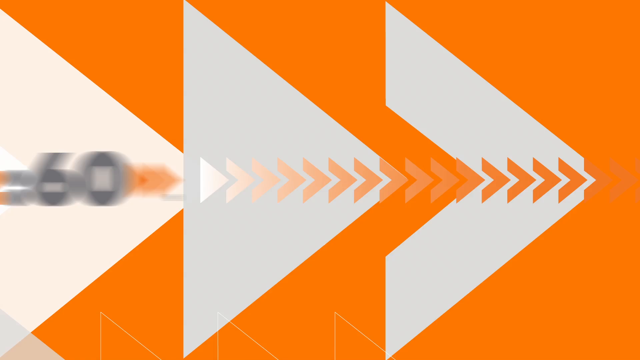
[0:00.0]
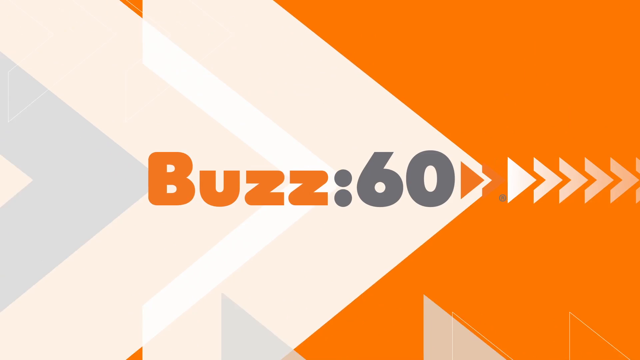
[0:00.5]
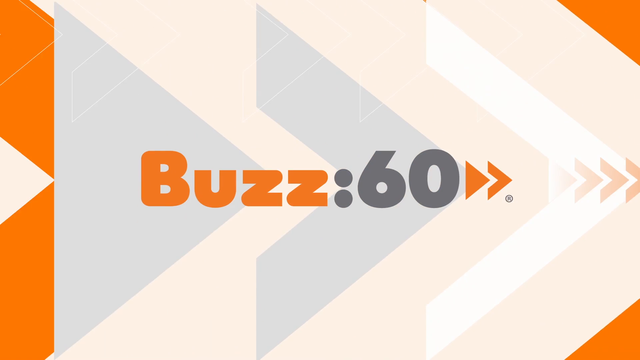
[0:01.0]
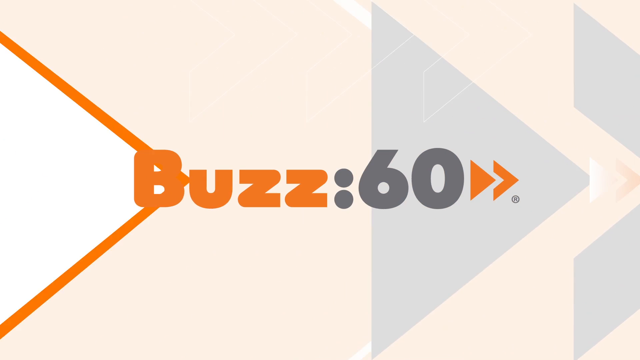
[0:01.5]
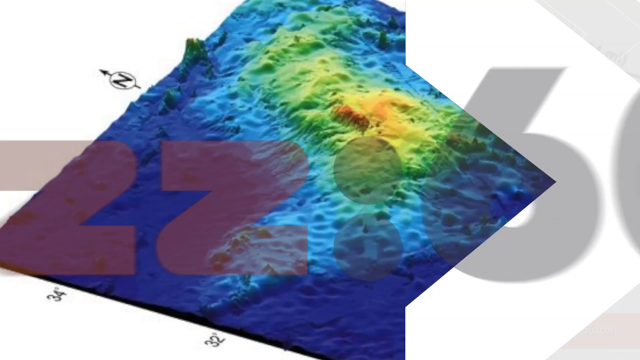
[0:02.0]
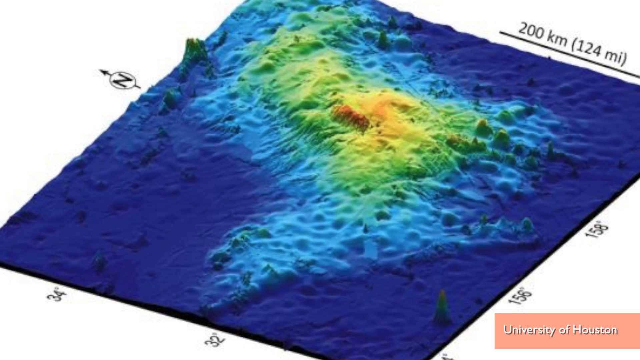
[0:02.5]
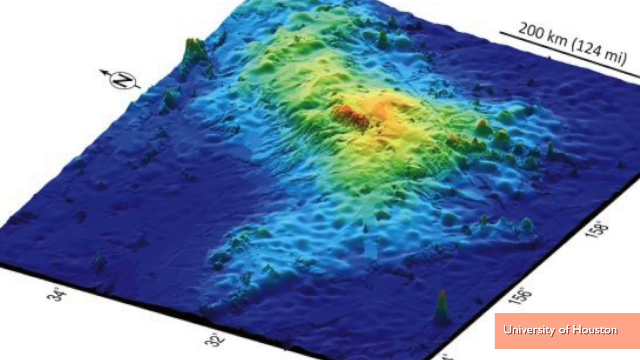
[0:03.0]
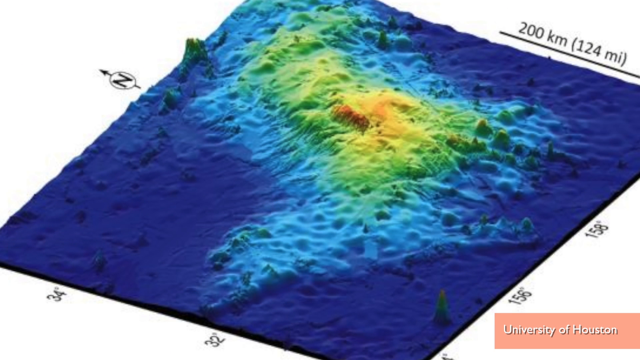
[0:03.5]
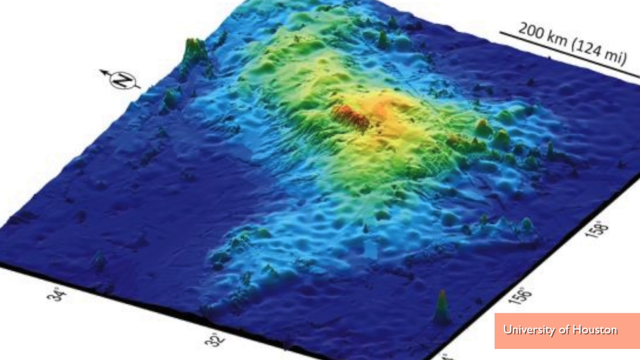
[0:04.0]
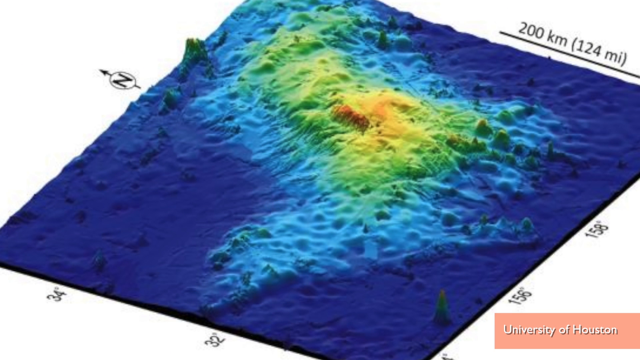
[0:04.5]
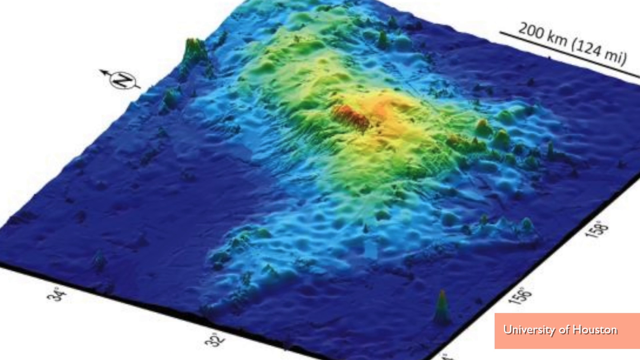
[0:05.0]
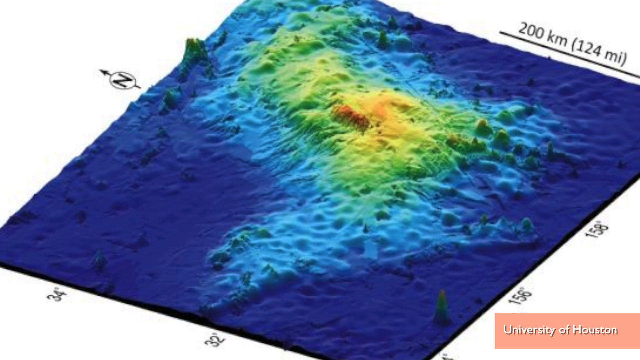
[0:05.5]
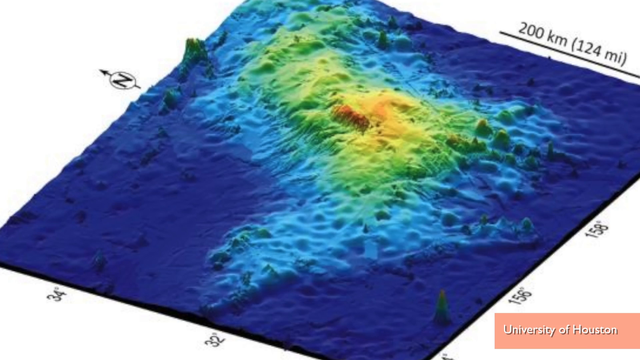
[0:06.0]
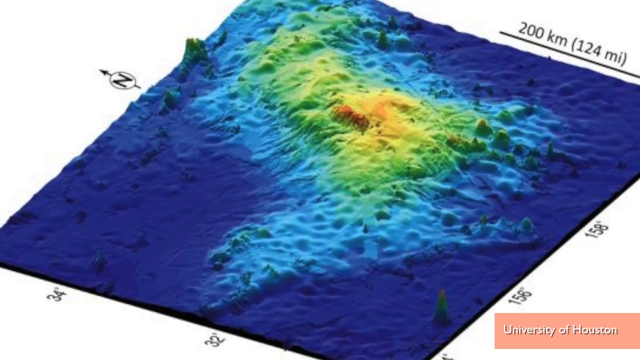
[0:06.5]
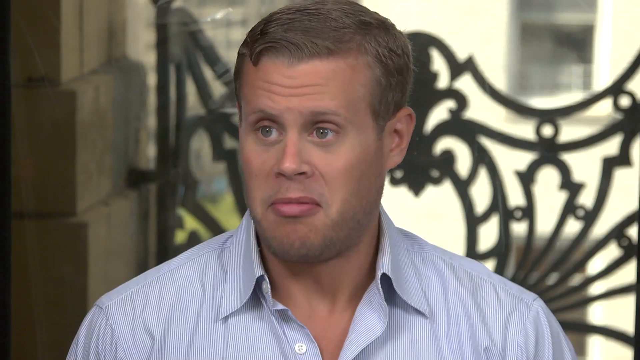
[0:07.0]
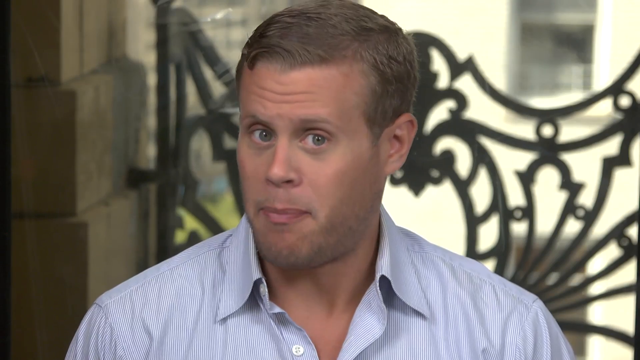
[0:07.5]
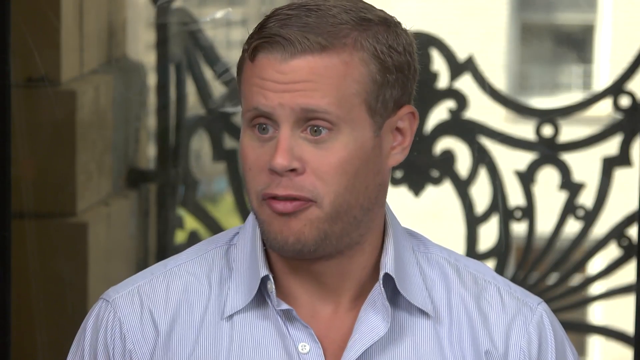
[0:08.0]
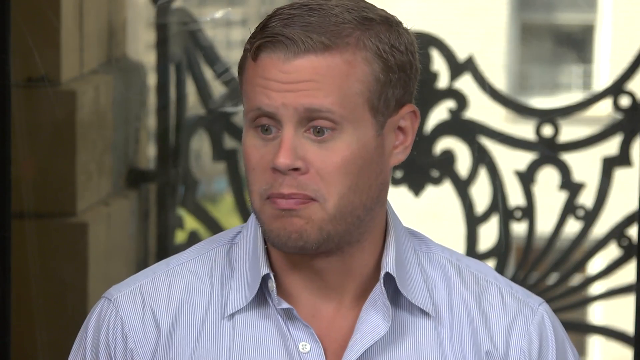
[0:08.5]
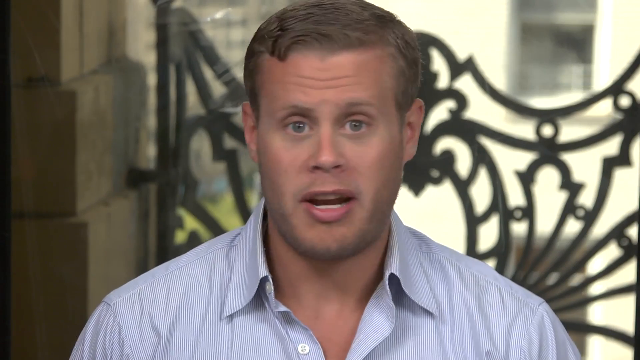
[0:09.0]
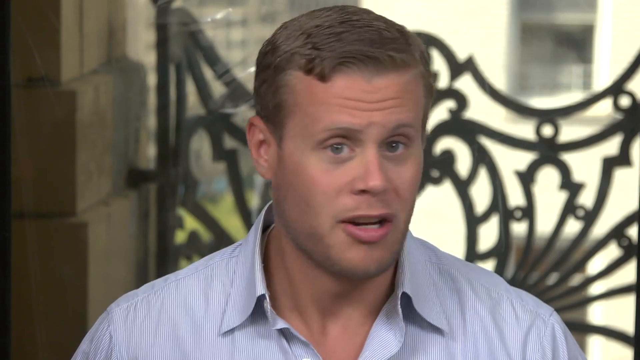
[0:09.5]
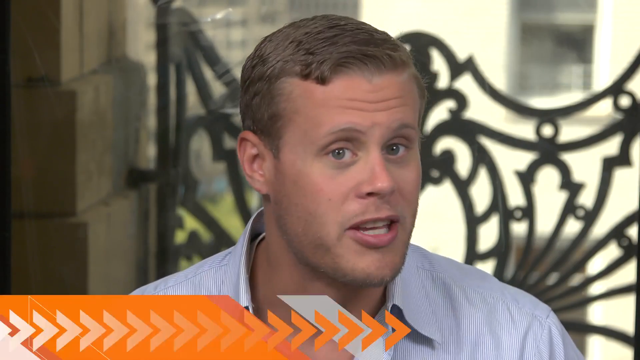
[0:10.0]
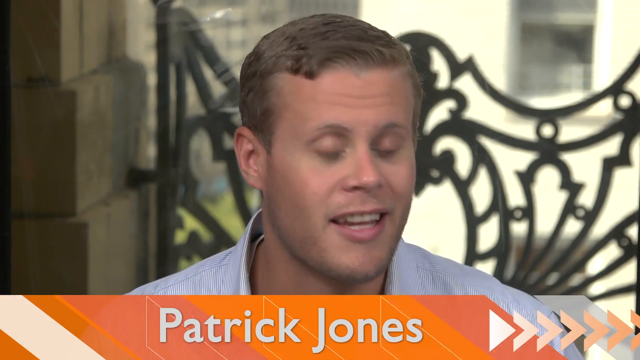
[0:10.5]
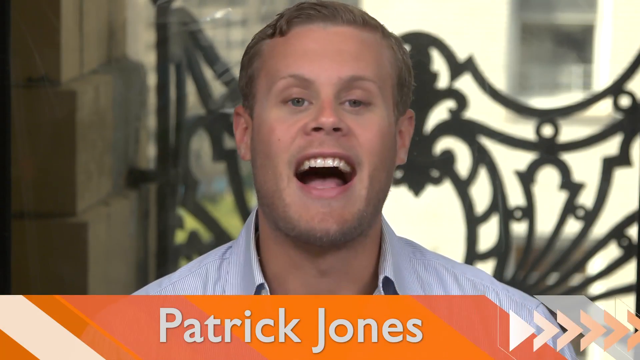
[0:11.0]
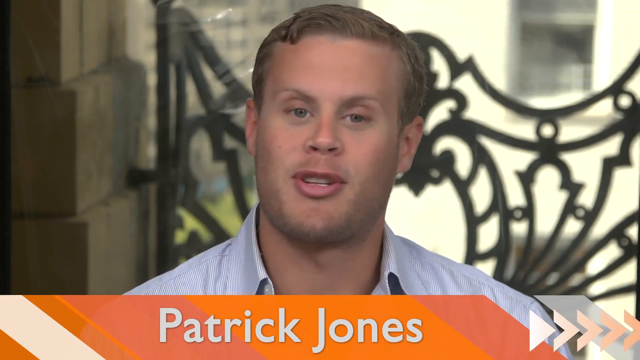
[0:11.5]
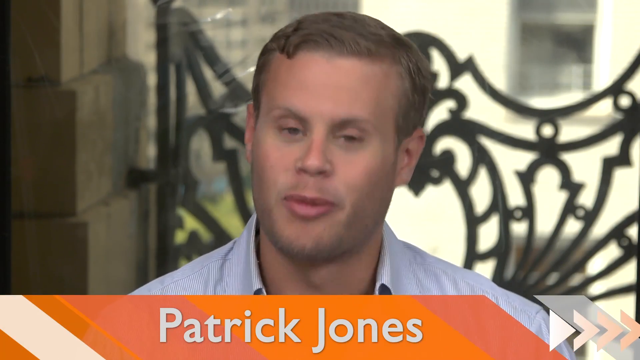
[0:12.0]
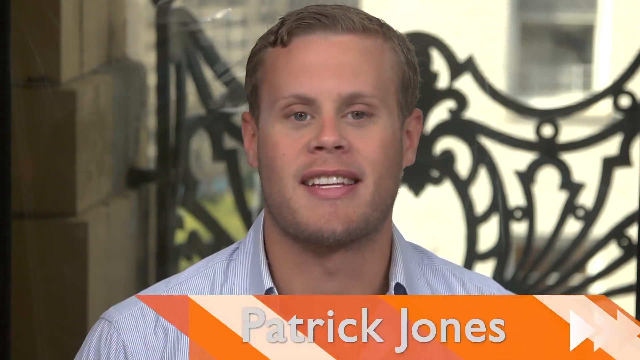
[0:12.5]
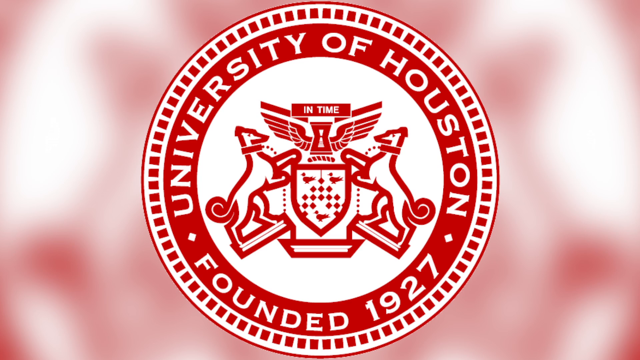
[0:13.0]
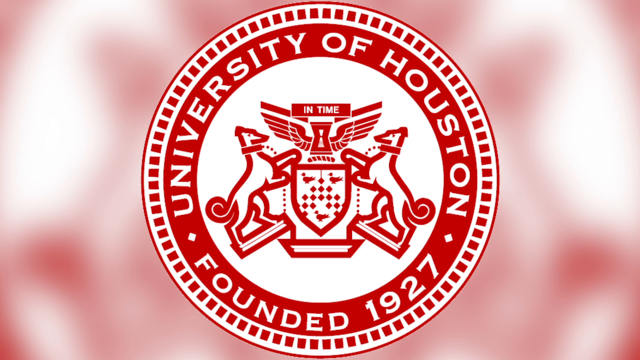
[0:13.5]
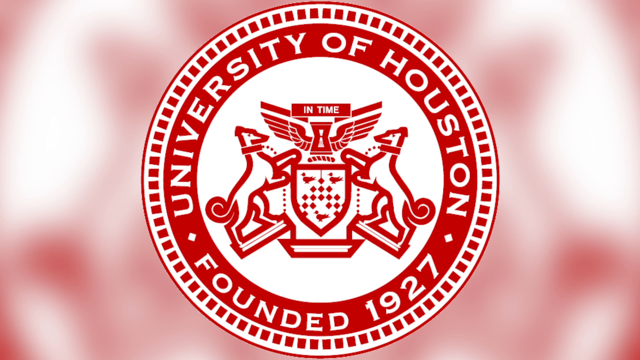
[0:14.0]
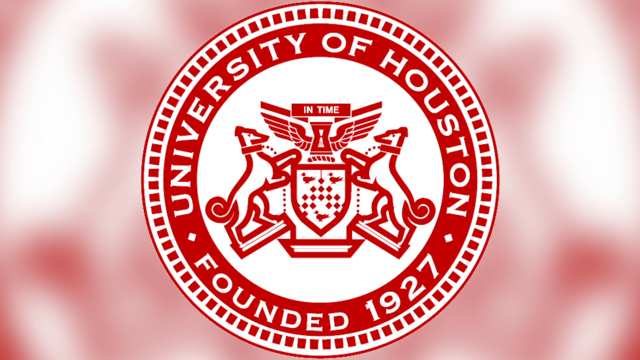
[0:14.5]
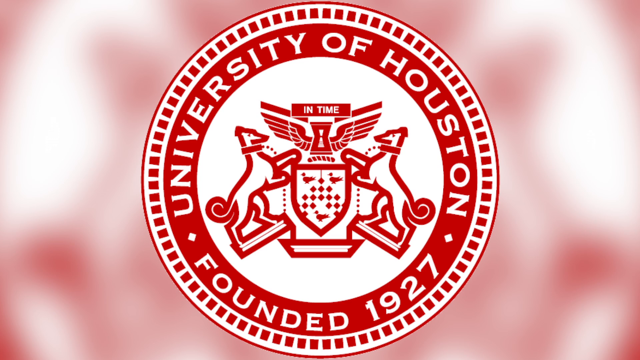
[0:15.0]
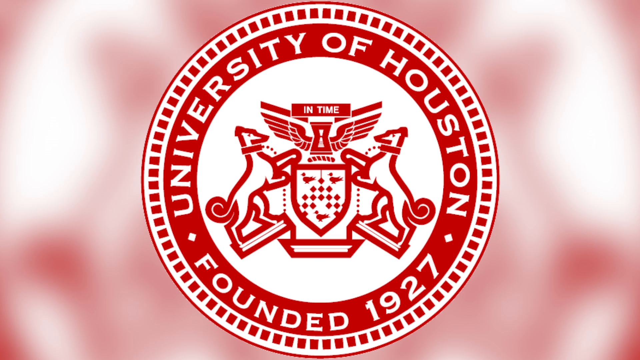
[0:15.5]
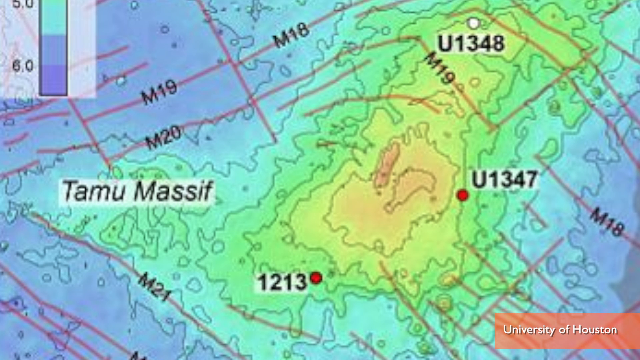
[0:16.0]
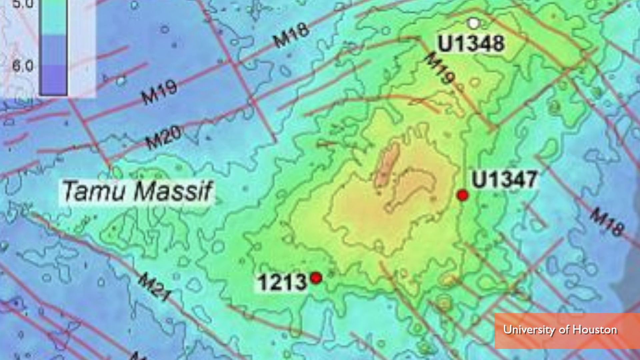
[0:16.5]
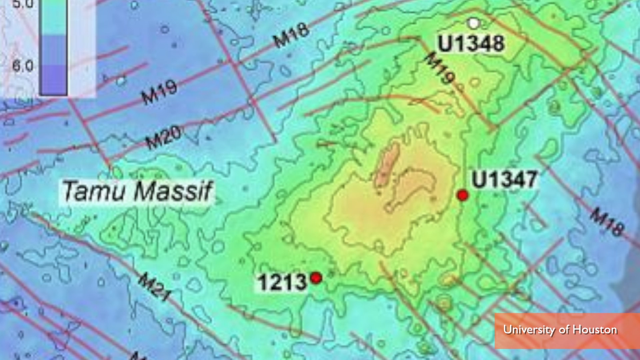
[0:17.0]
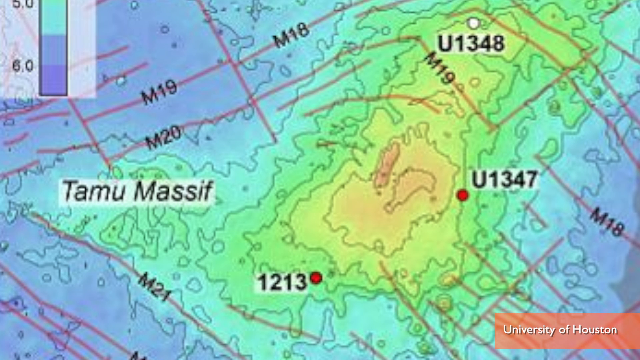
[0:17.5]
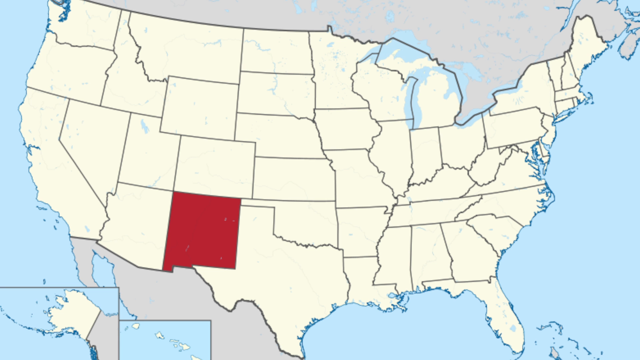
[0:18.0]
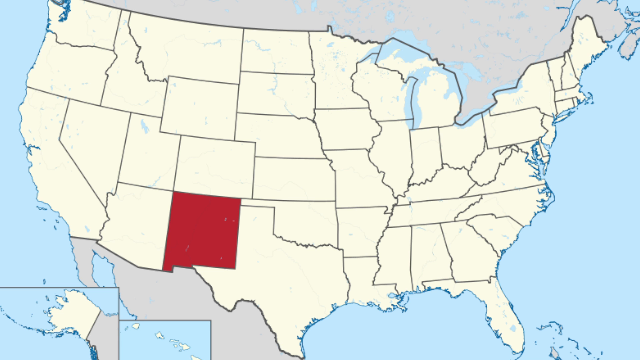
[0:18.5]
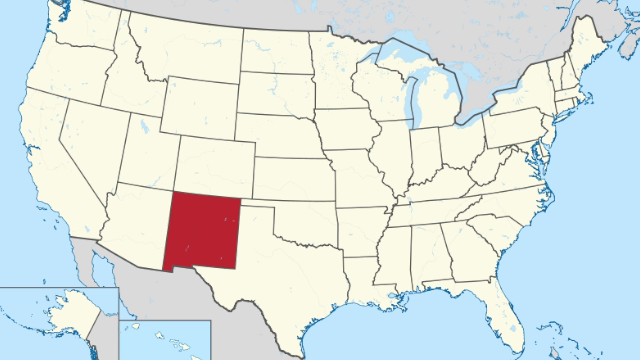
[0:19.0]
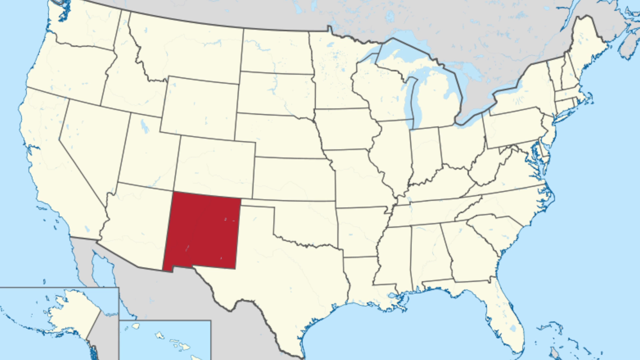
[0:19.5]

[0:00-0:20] The video opens on an orange, white, light tan and somewhat light gray graphic, with many moving triangles on the right. Letters reading "buzz 60" appear, with "buzz" in orange text and "60" in dark gray, and then they disappear. The view switches to what looks like a very textured 3D topographic map, dark blue at the bottom and graduating up the mountains from blue to lighter blue to green to yellow, with measurements and directions around its side. Next, a Caucasian man with short brown hair, wearing a light gray button-down shirt, talks to the camera. Behind him are a cinderblock or brick building and a black ornate iron gate. An identifier comes up at the bottom reading "Patrick Jones" in white text on an orange banner; a white diagonal line pops up on the left of the text box, and white arrows move at its right side. The scene then switches to a large University of Houston logo that takes up most of the screen, set against an out-of-focus red and white background. The circular logo has "University of Houston" in white over the top half and "founded 1927" at the bottom, with a red seal in the middle showing what appear to be two greyhounds facing each other and a shield between them. Around the red text band with the university's name runs a white line with many little red squares. Next comes a close-up of a map in the same colors as before but two-dimensional, with small black letters and numbers identifying features. The view then switches to a map of the United States on which New Mexico appears to be highlighted in red; everything else is white, the ocean is blue, and the areas of Canada and Mexico are gray.